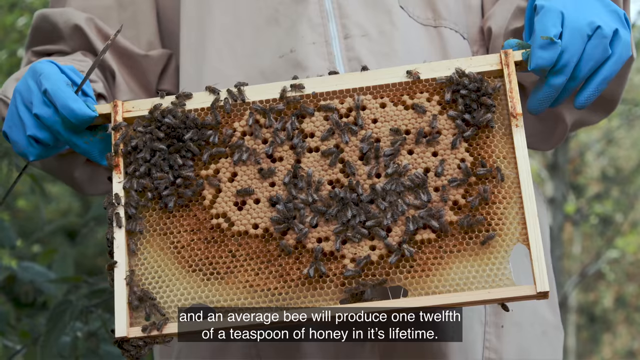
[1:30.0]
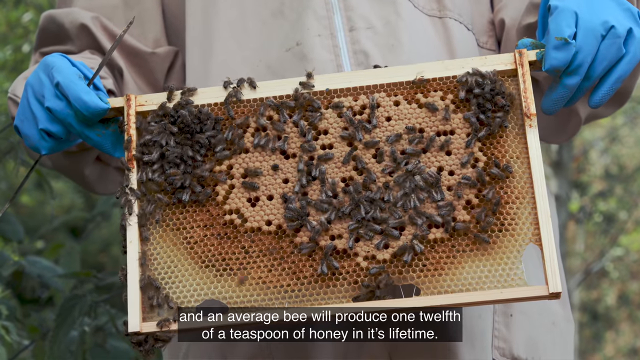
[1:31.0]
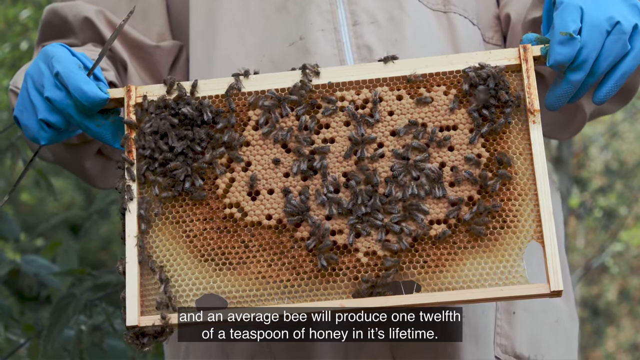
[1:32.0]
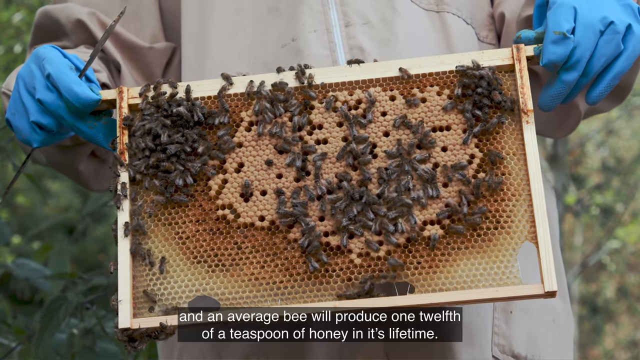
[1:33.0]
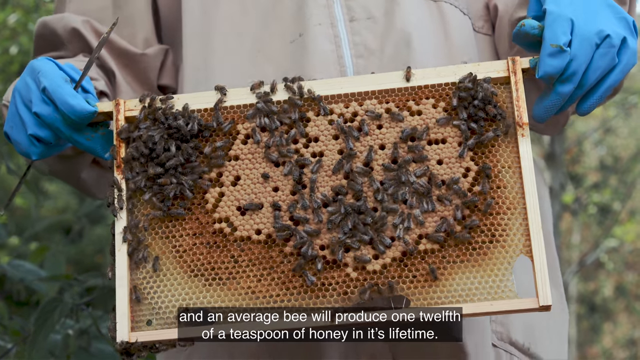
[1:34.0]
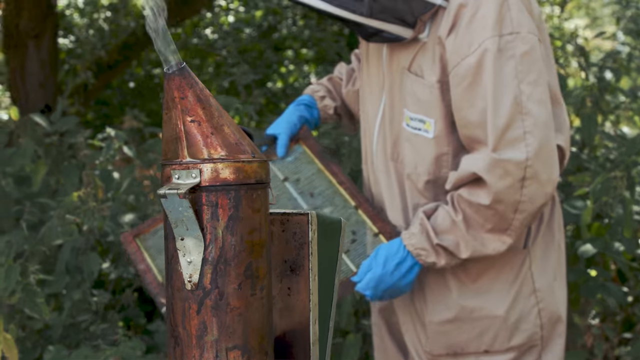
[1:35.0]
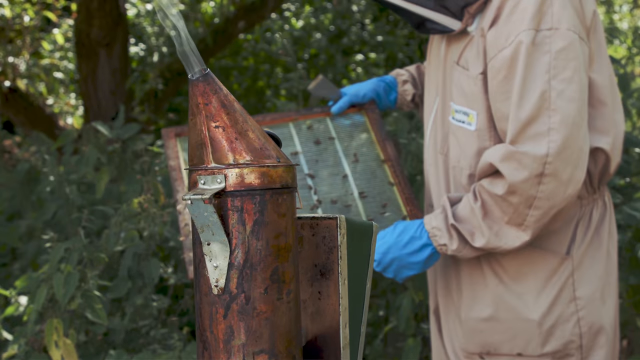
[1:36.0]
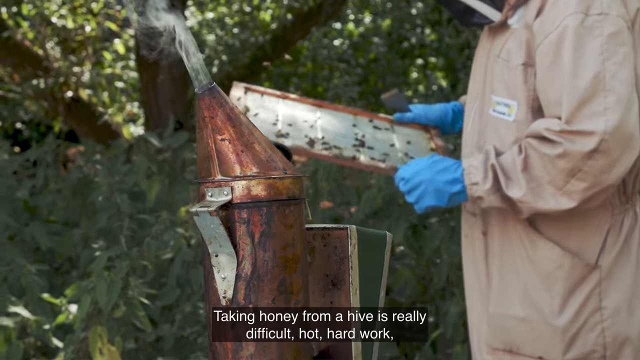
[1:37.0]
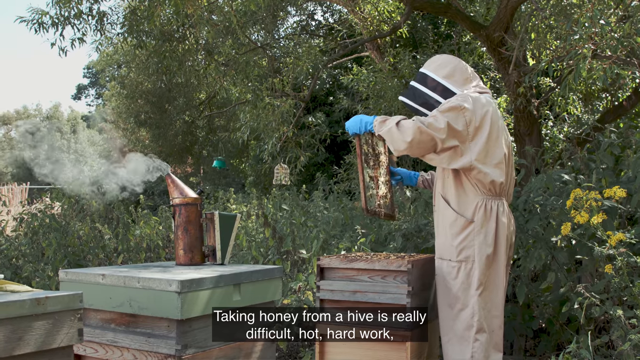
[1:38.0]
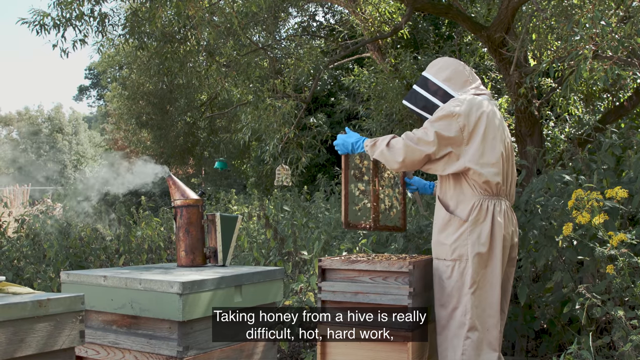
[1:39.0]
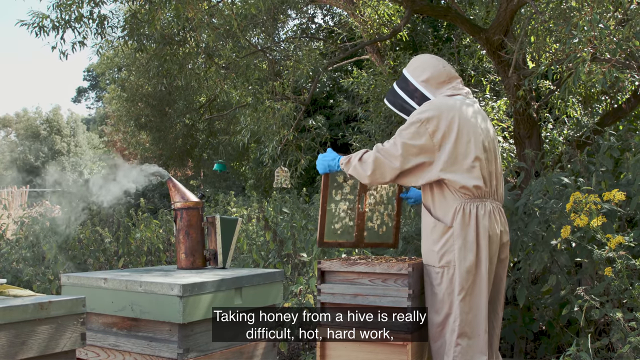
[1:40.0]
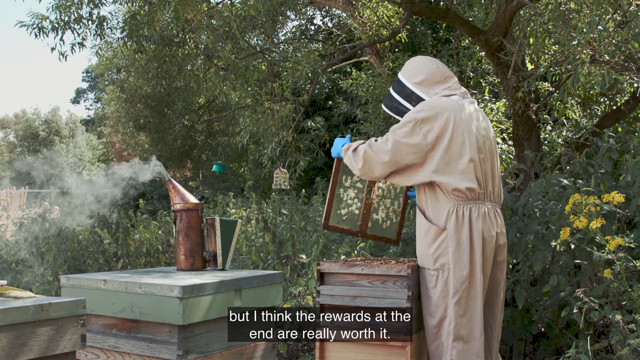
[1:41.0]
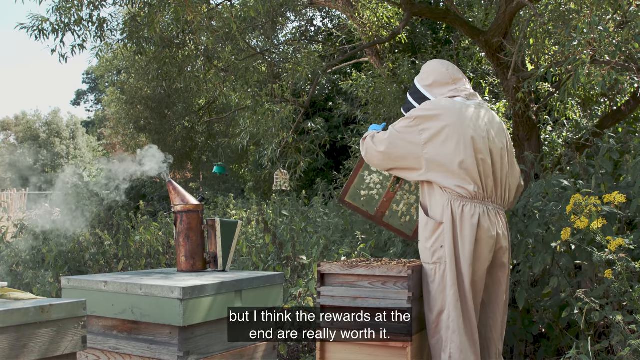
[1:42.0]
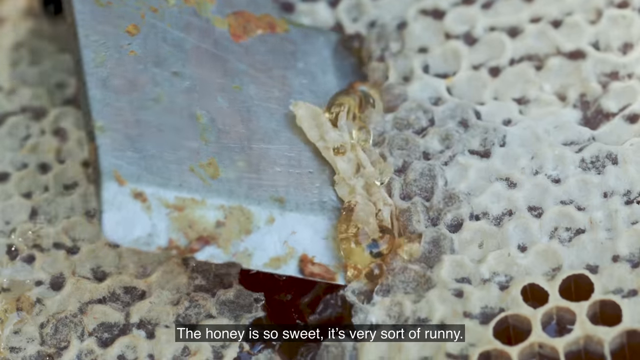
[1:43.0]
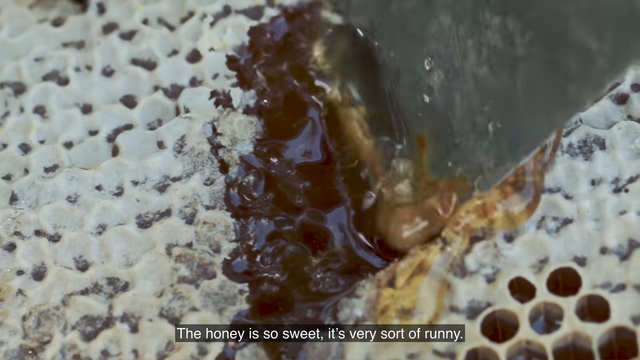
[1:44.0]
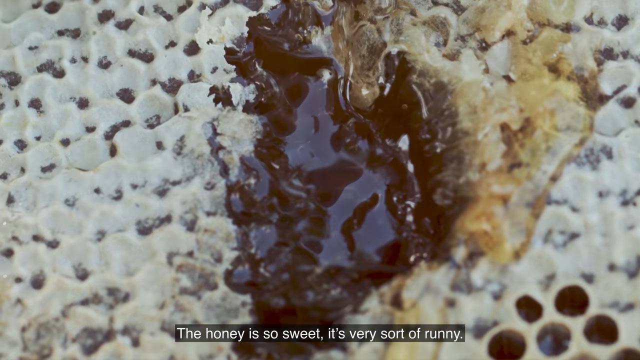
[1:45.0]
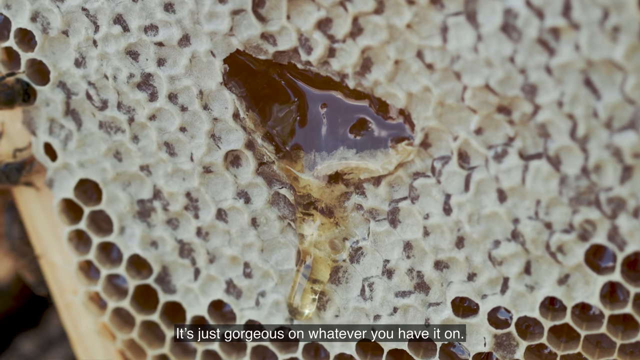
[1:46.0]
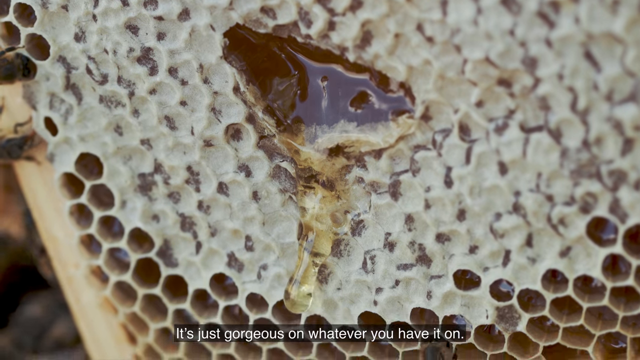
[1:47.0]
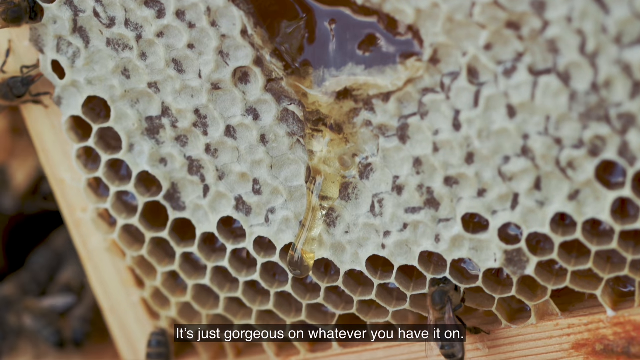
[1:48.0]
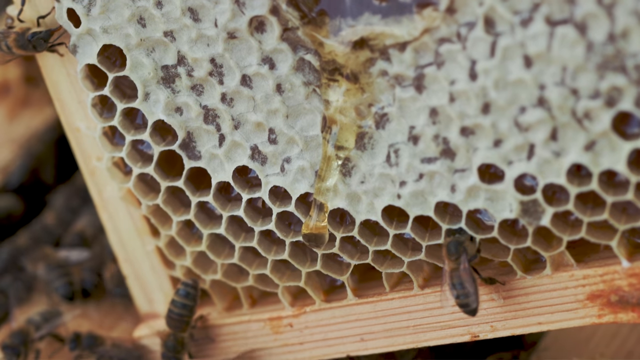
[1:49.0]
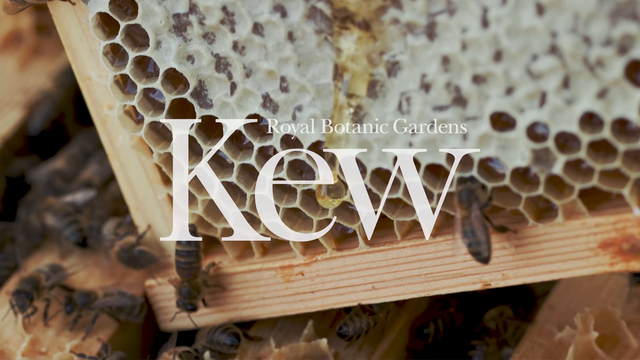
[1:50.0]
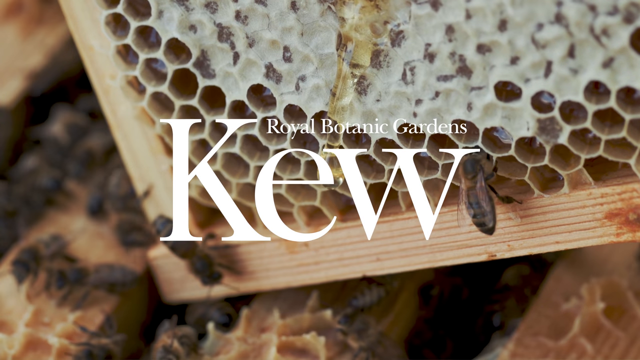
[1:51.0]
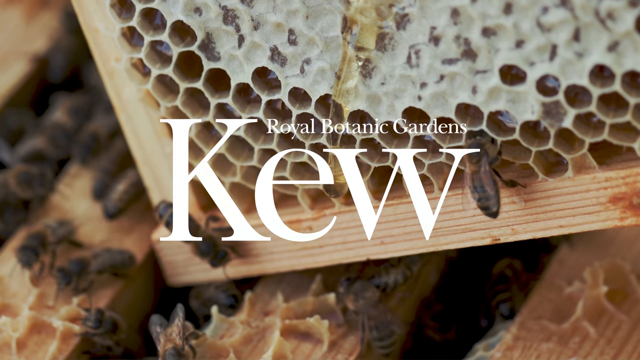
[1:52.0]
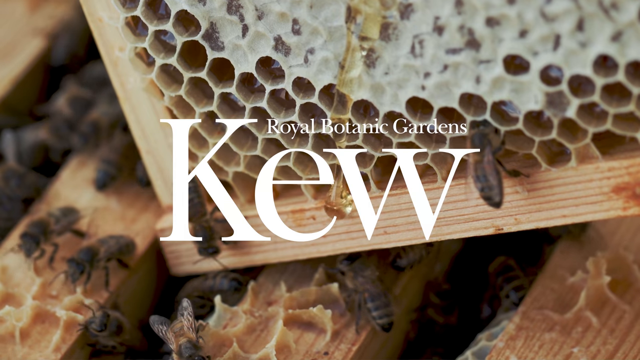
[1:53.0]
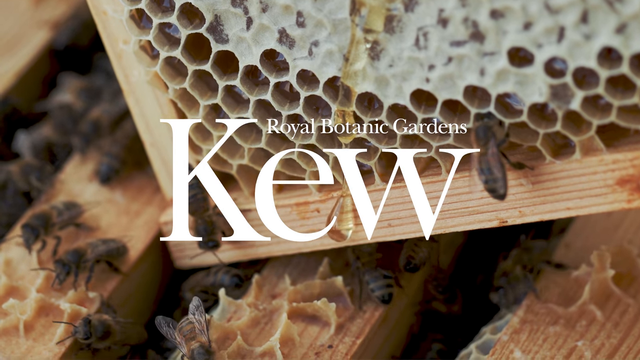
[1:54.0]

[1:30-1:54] A beehive is shown with bees on top where it is white, and something brown is oozing out, possibly honey. Jones keeps taking out frames to check the honey inside the beehive, and the smoking tin is there, continually releasing smoke. This takes place in a bushy area with a lot of big trees. He holds a steel tool that could be a scraper and scrapes the top of the white part, and something starts oozing out. At the end, a closing sequence appears showing the Royal Botanic Gardens, Kew.